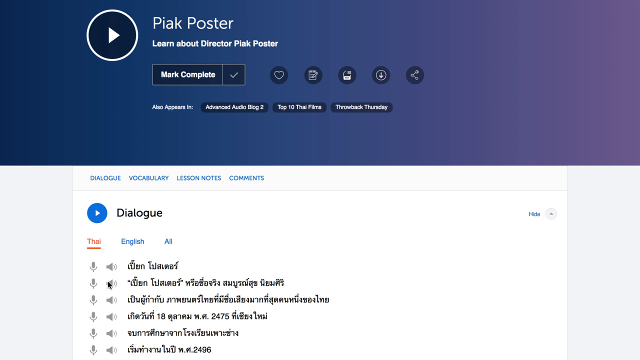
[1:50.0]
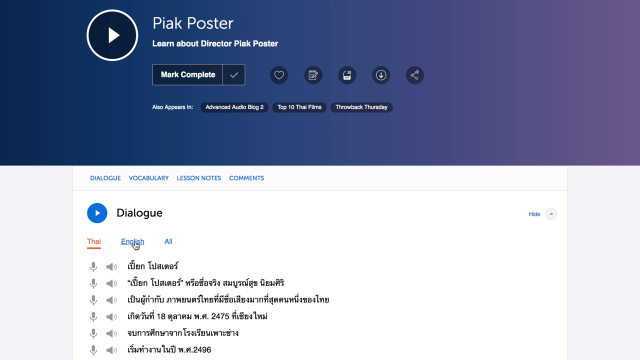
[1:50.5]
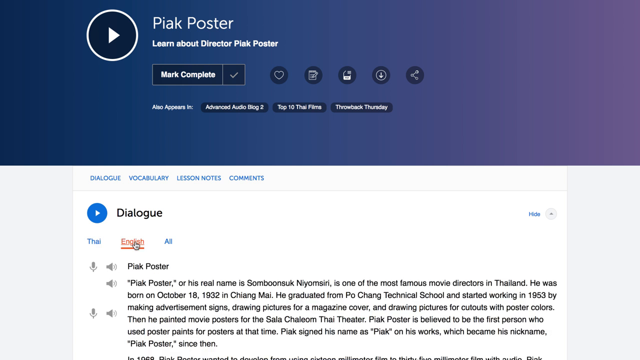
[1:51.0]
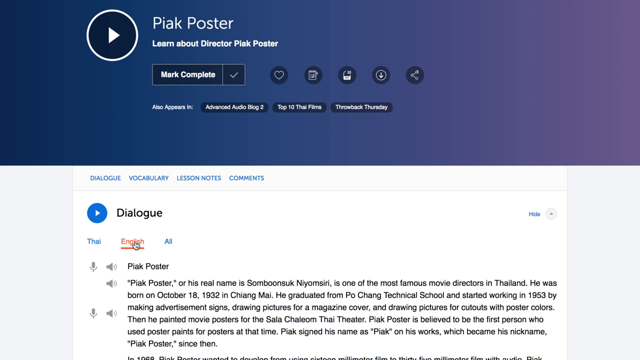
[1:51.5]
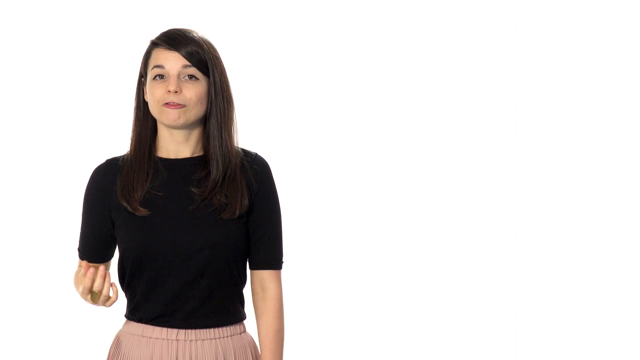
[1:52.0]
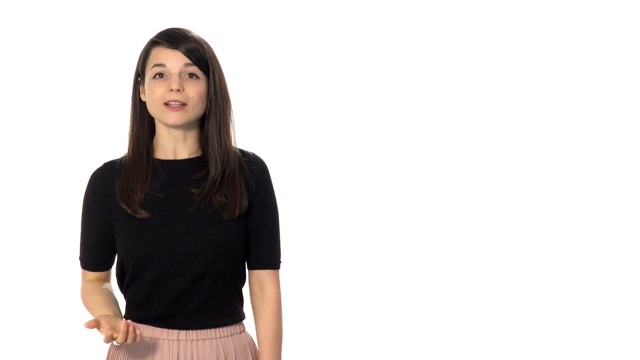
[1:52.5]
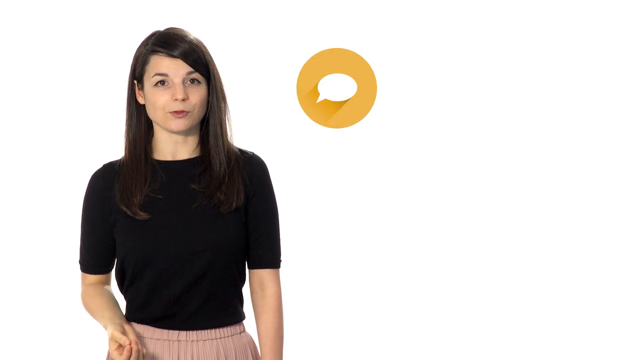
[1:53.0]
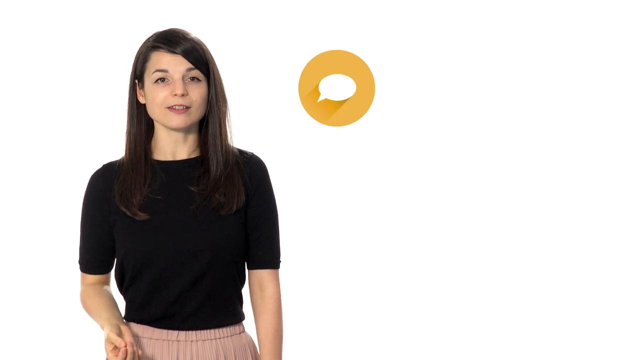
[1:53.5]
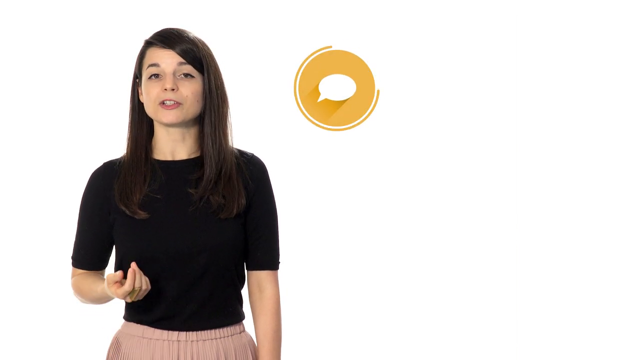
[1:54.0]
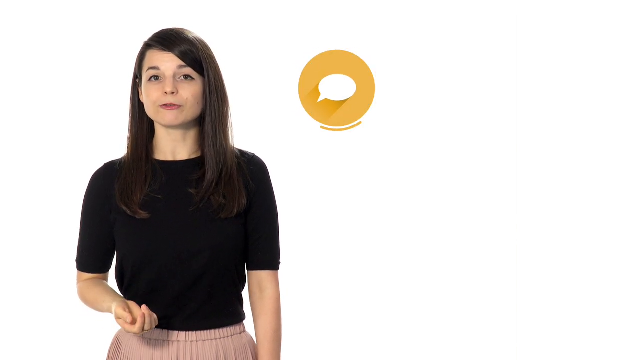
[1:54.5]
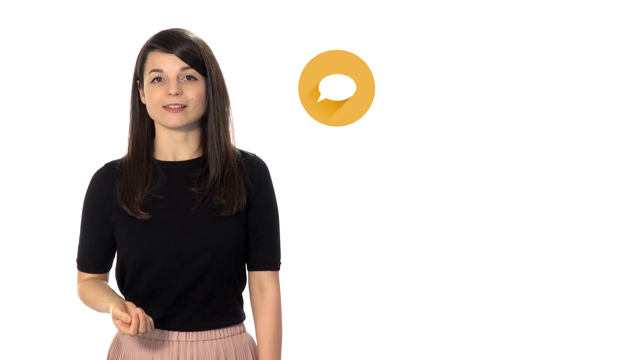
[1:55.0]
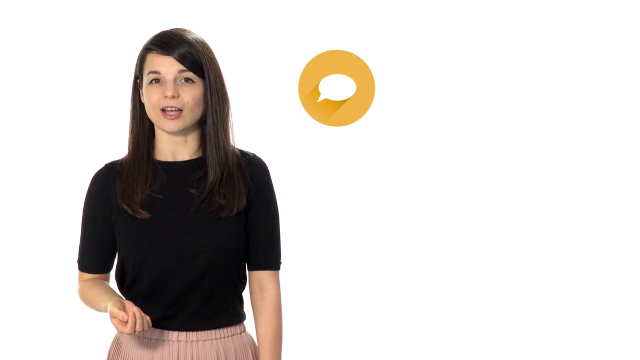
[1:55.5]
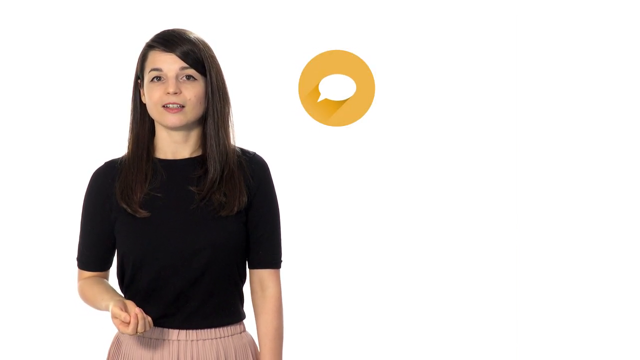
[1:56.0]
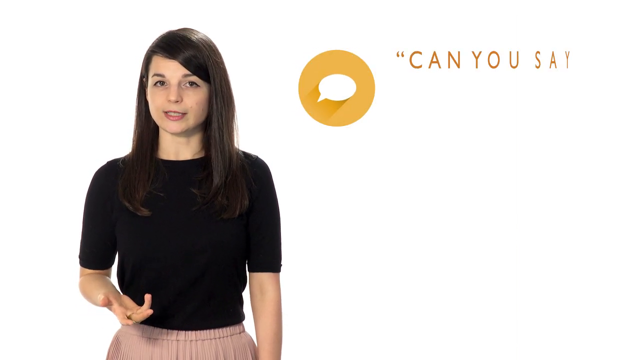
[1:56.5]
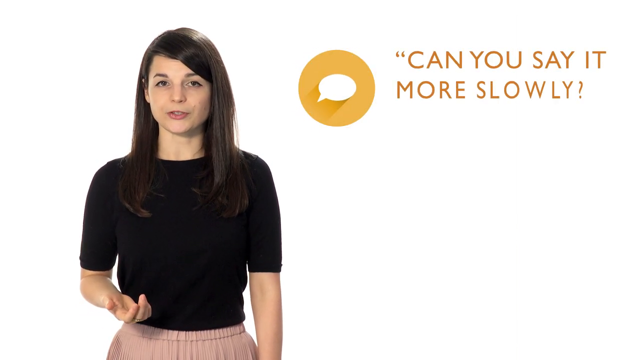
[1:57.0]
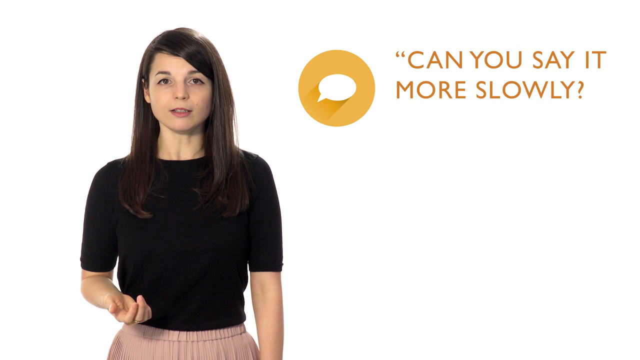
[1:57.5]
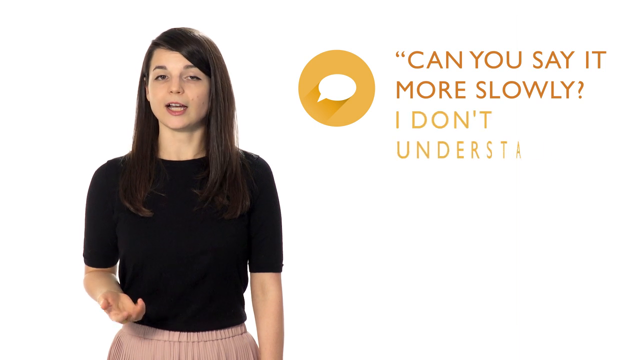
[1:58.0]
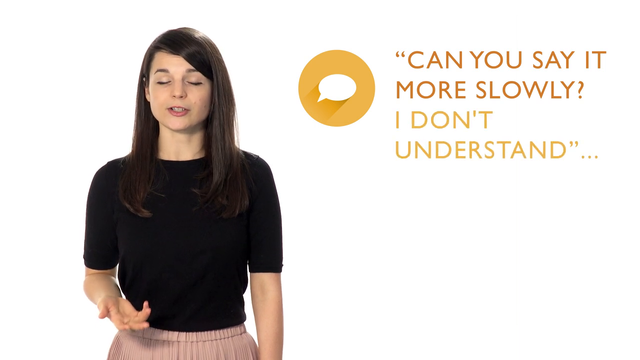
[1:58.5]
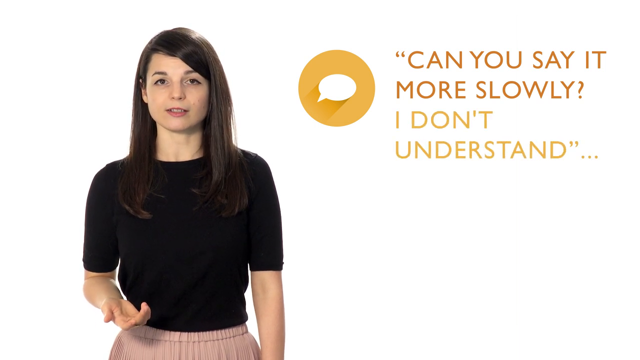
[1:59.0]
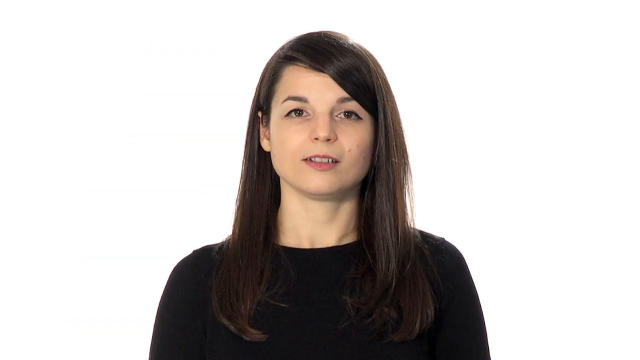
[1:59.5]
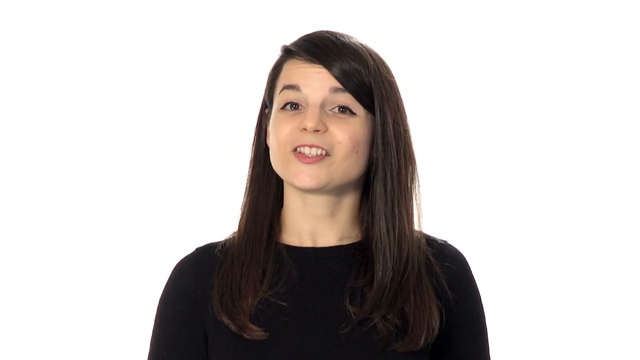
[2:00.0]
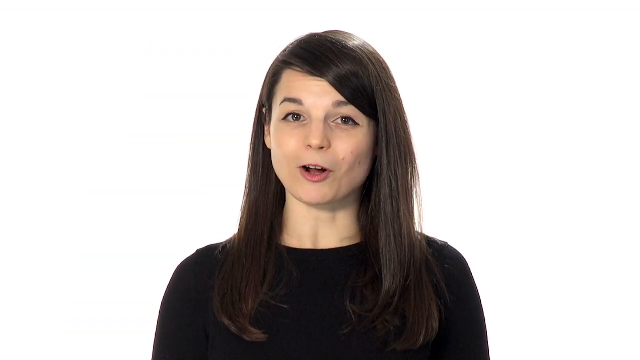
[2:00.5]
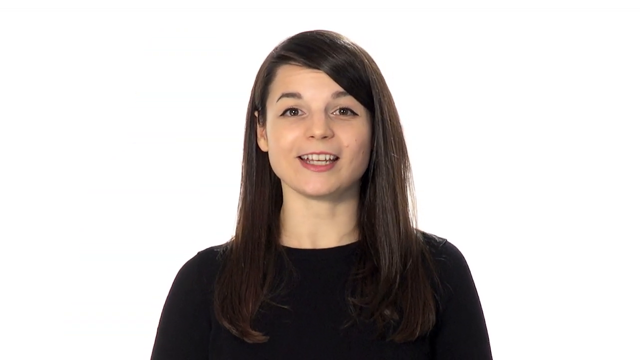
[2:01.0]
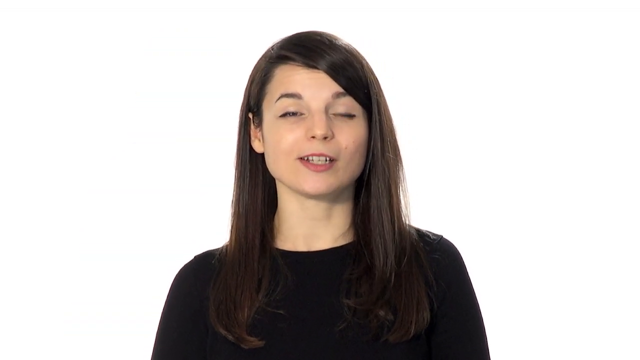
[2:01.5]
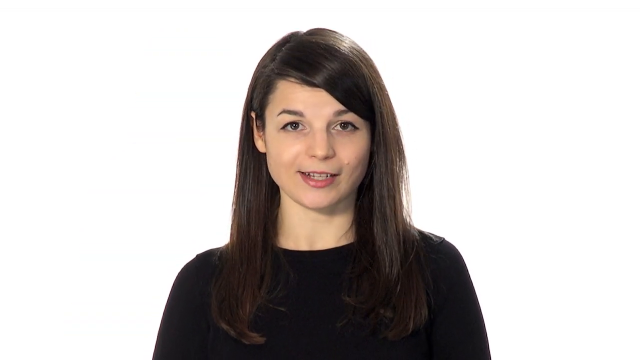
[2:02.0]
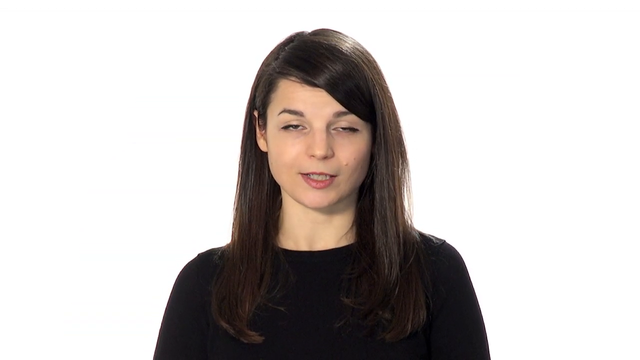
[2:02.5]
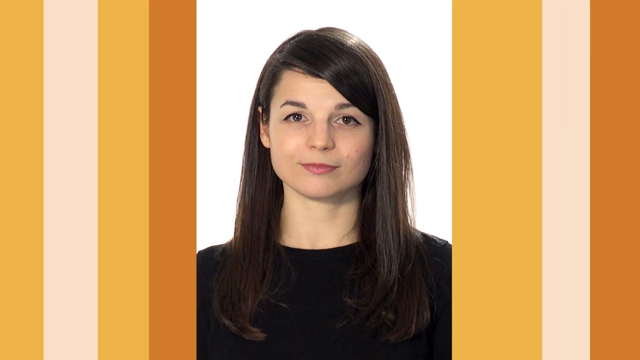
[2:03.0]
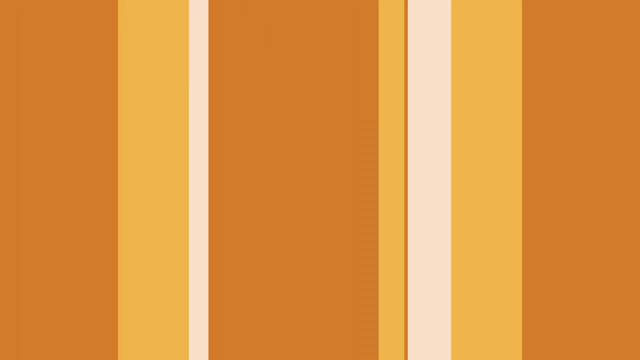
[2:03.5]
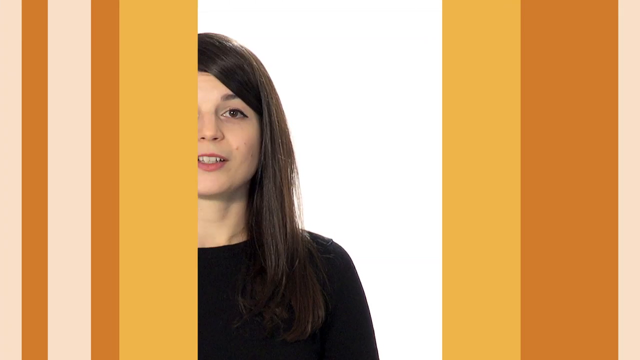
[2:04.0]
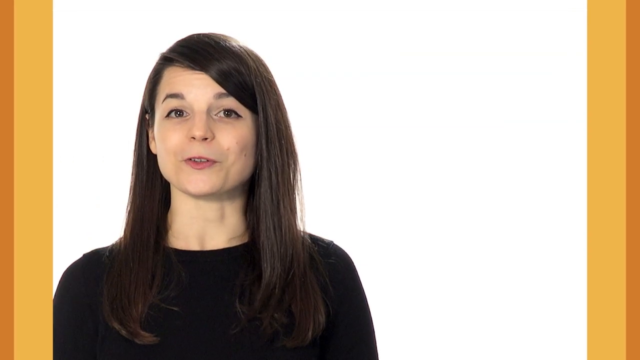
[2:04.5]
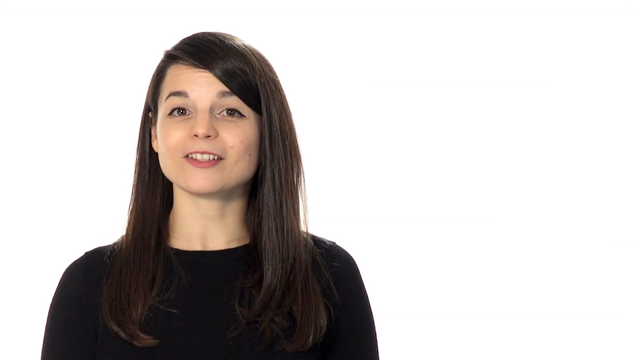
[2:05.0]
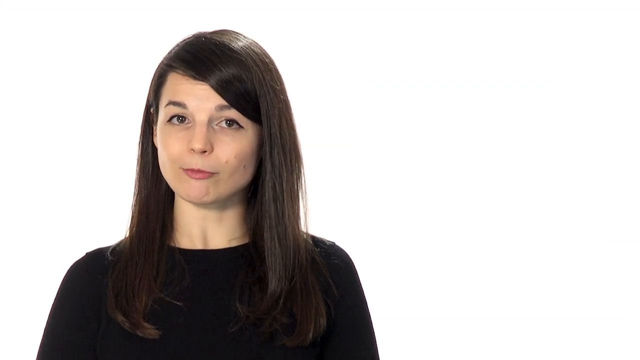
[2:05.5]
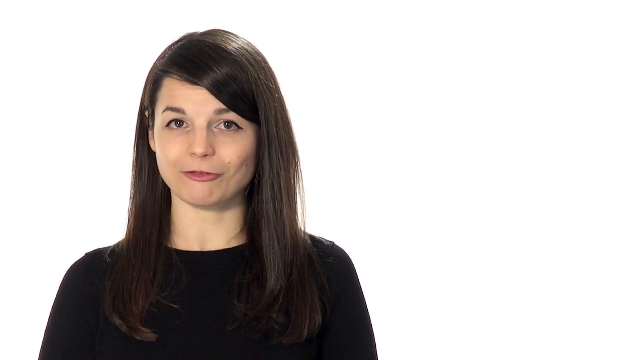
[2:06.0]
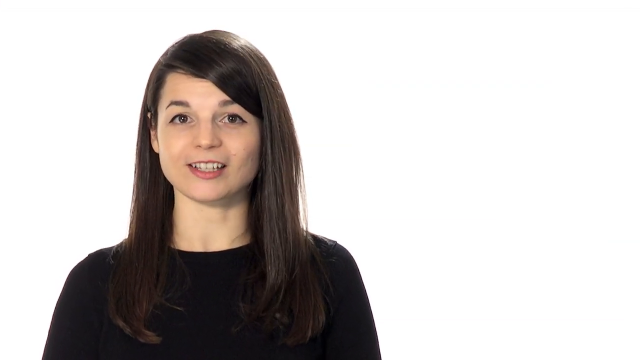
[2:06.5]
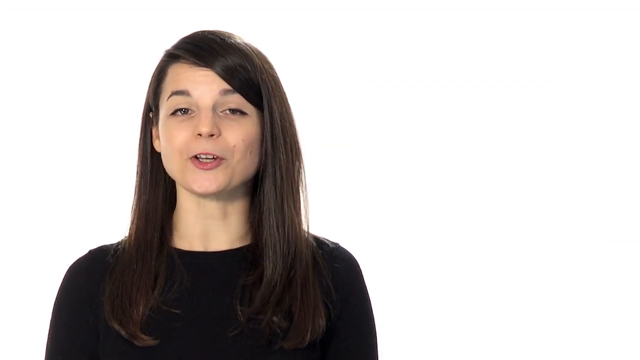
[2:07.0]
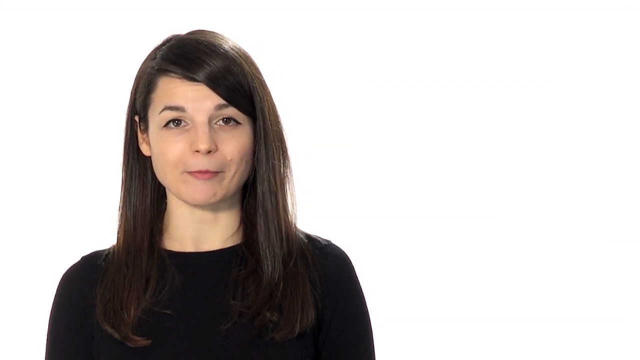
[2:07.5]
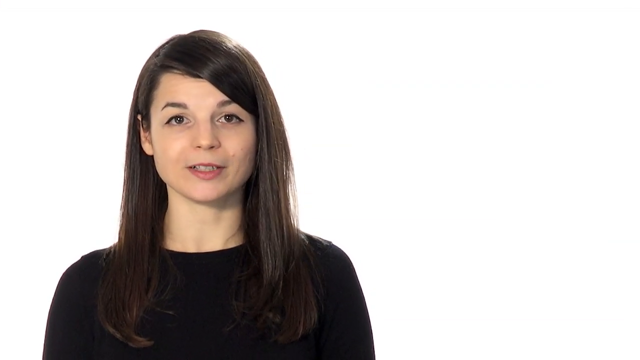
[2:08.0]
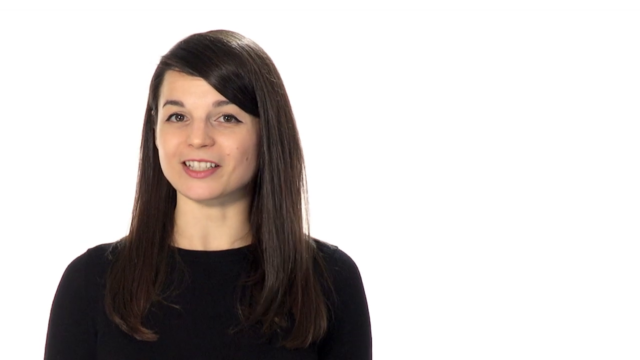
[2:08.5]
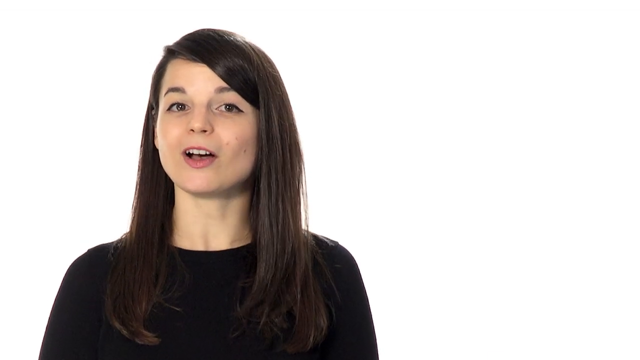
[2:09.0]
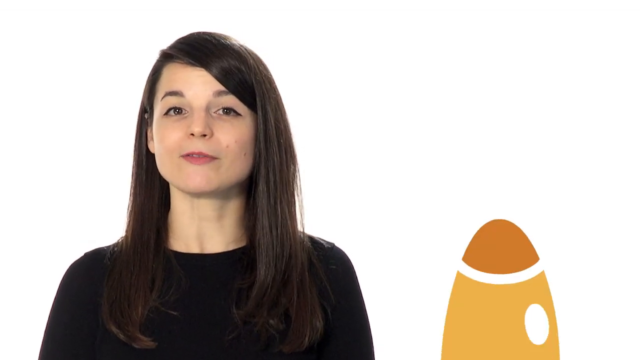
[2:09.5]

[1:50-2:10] The mouse moves up to the English tab beside Thai and clicks it, and all the words translate from Thai to English. The screen goes back to the woman speaking on the left against the white background. On the right, an orange-yellow circle appears with a speech bubble in it and a line animating around the circle, and orange text appears beside it: "can you say it more slowly? I don't understand." The video cuts back to the woman, now in the center of the white background, making slight head movements as she speaks toward the camera. Orange lines come across the screen in a transition, and she appears on the other side of them on the left side of the white screen. She continues talking as an orange cartoon-style rocket comes up on the right side of the screen.